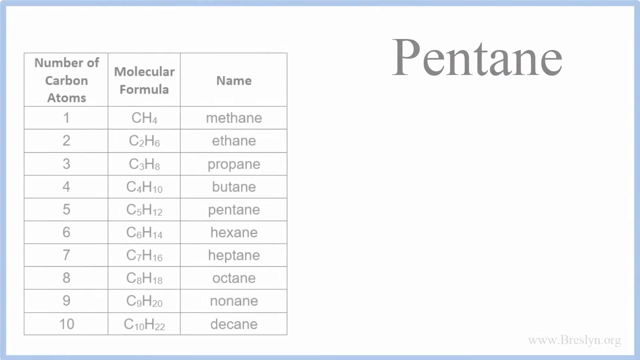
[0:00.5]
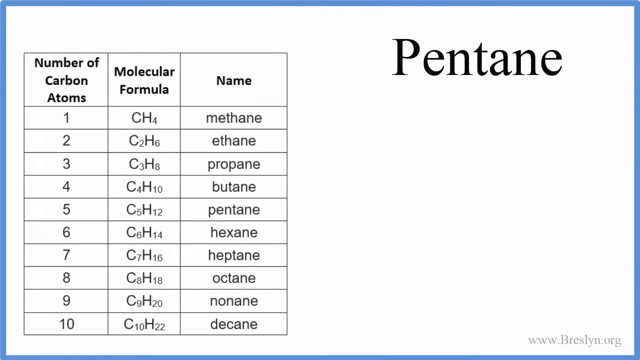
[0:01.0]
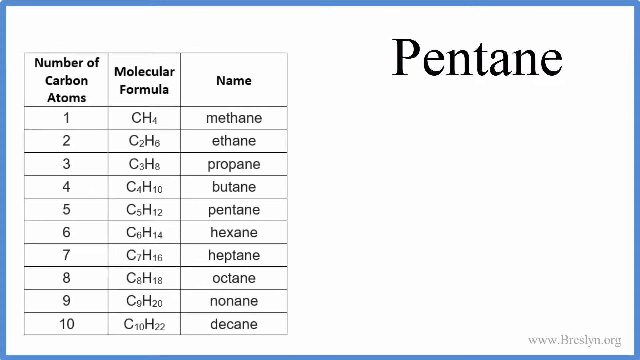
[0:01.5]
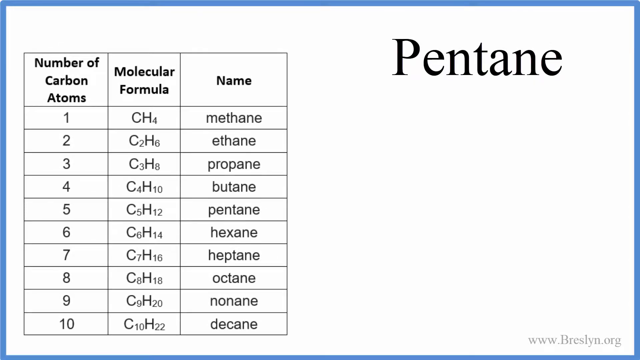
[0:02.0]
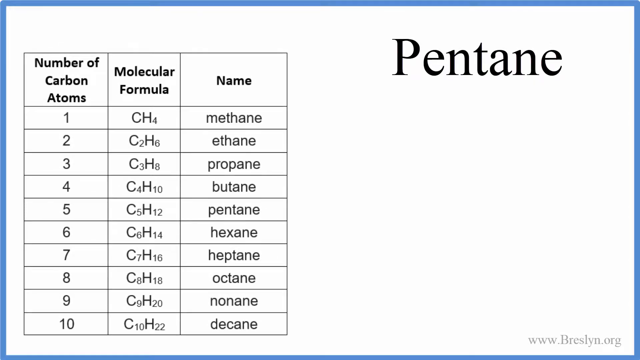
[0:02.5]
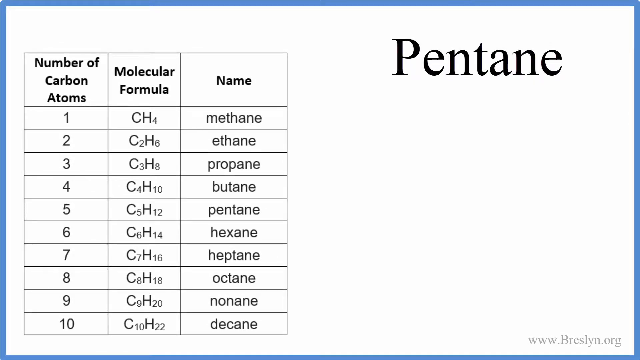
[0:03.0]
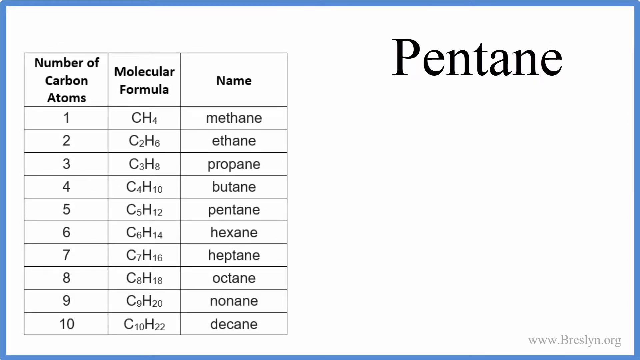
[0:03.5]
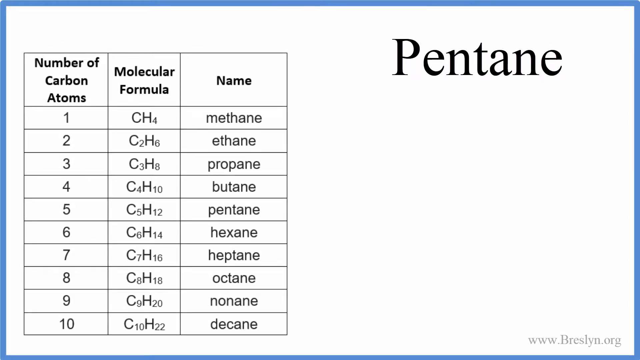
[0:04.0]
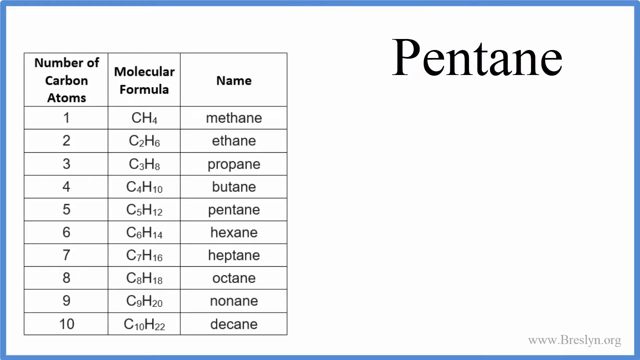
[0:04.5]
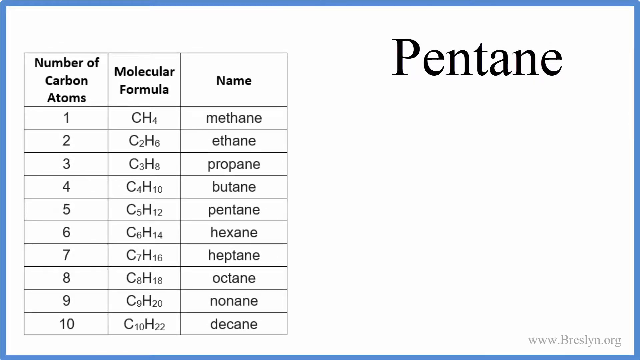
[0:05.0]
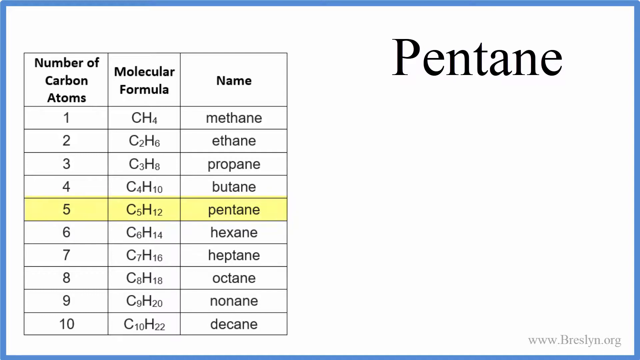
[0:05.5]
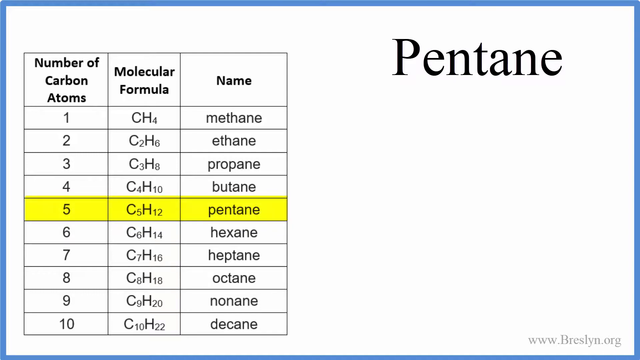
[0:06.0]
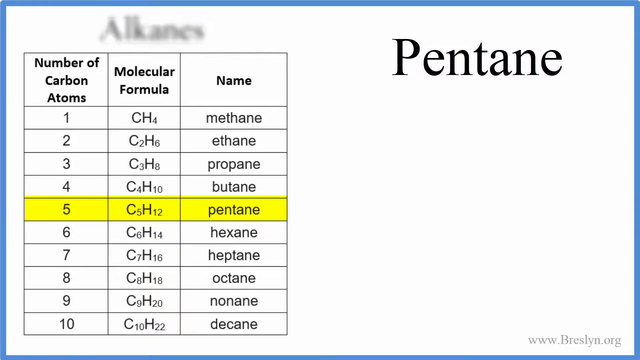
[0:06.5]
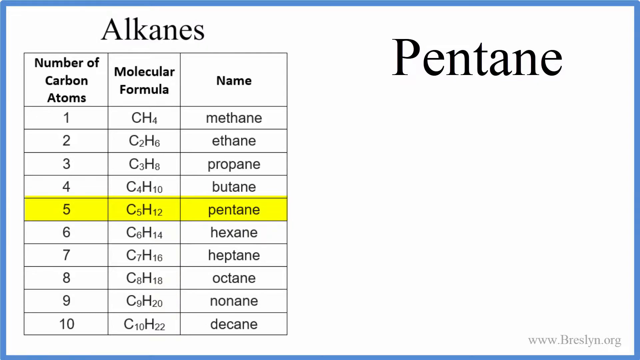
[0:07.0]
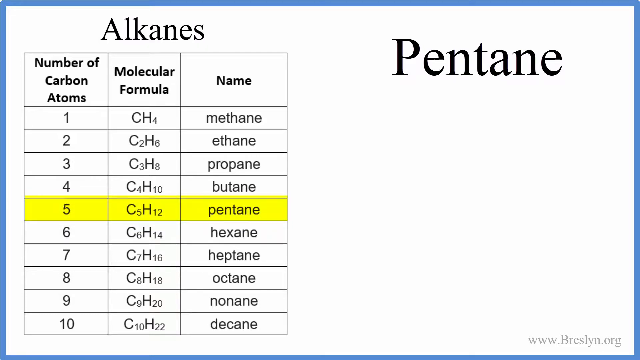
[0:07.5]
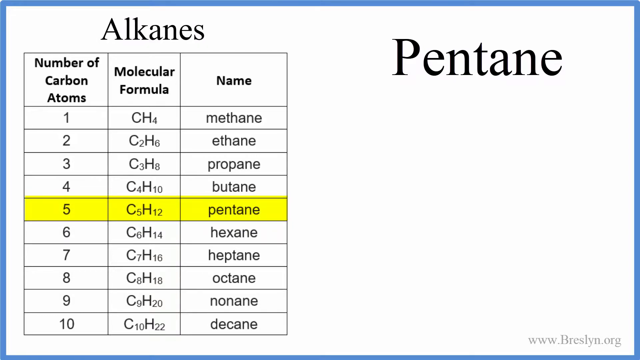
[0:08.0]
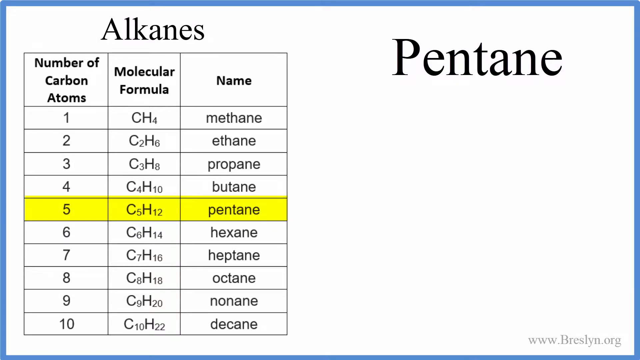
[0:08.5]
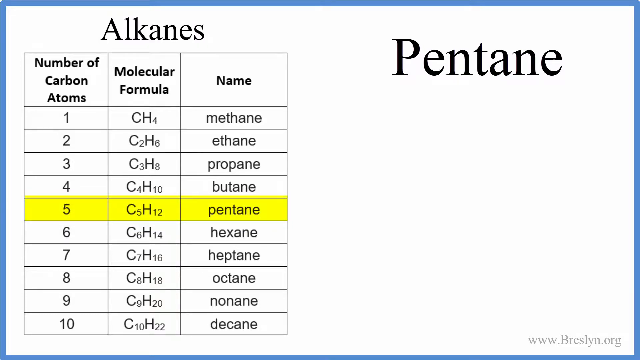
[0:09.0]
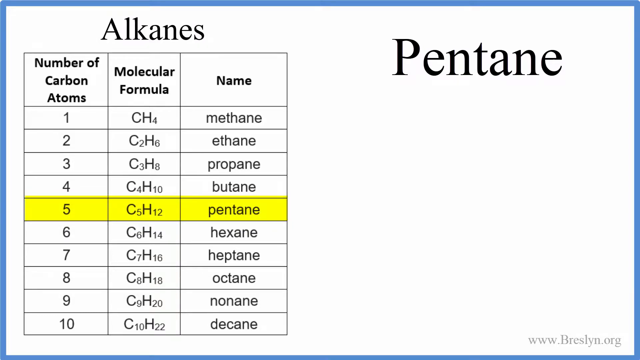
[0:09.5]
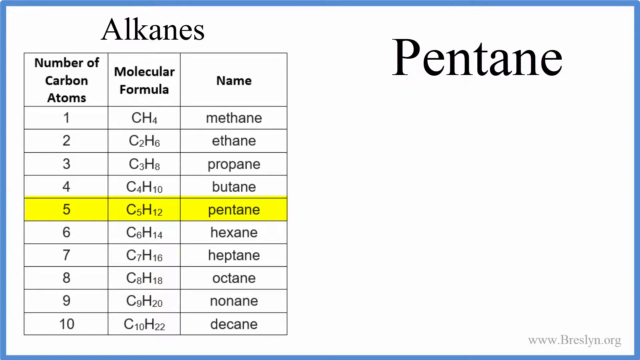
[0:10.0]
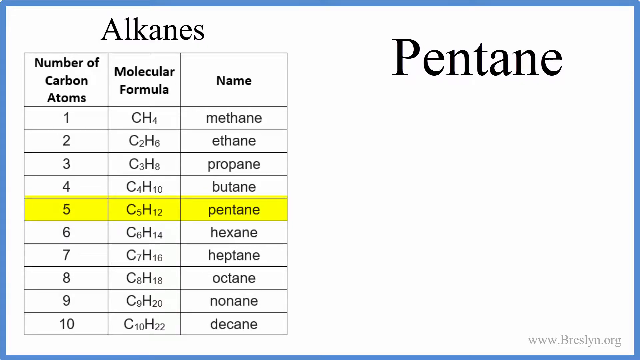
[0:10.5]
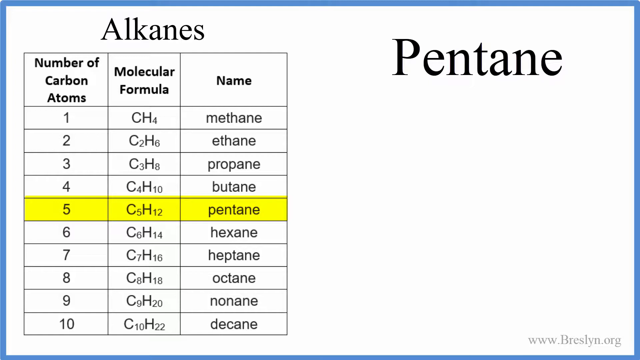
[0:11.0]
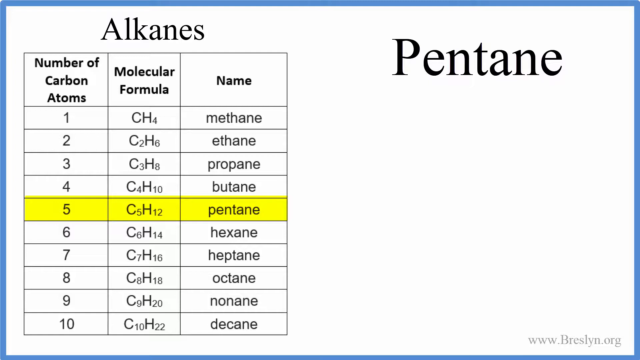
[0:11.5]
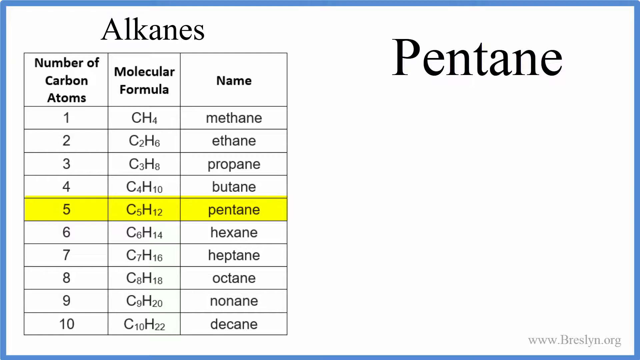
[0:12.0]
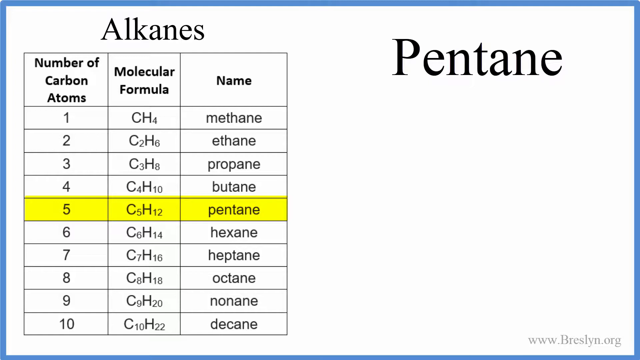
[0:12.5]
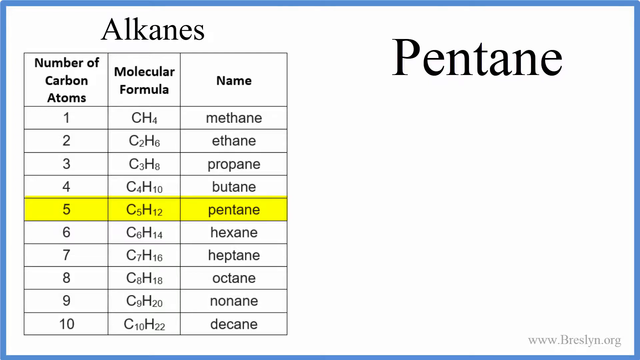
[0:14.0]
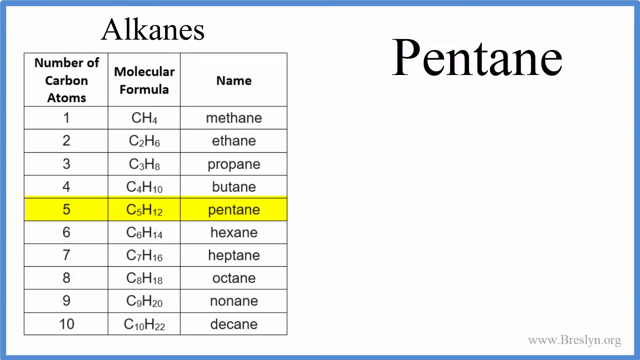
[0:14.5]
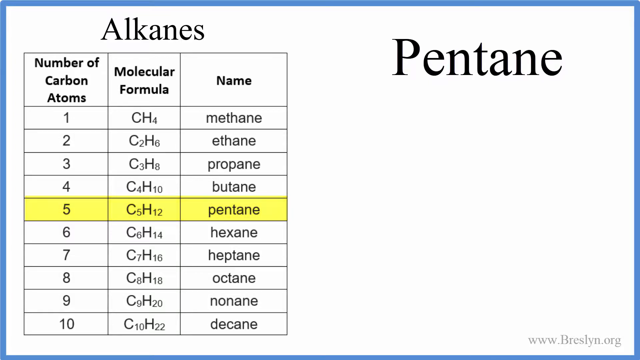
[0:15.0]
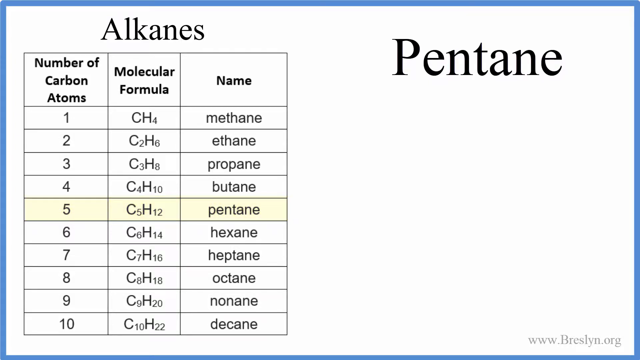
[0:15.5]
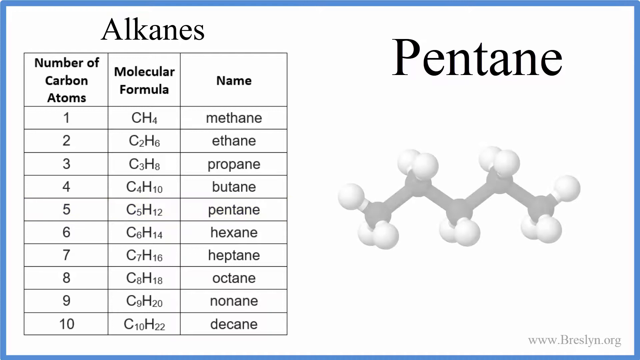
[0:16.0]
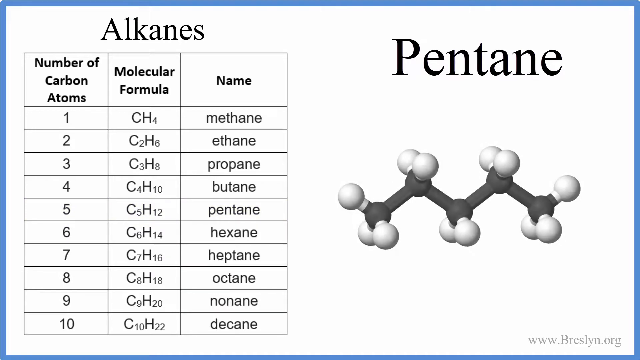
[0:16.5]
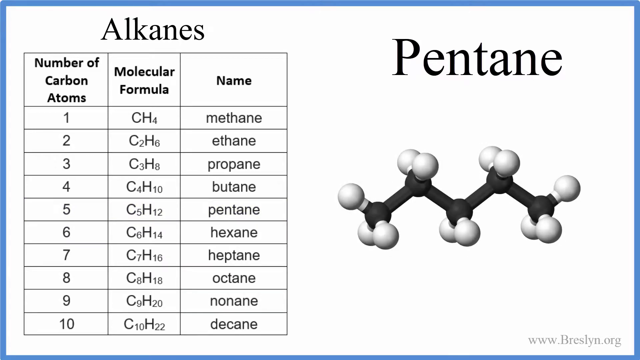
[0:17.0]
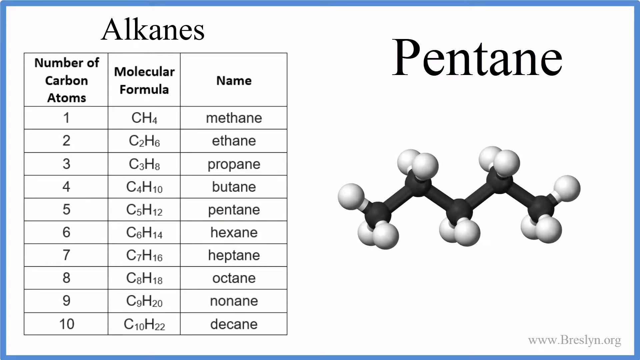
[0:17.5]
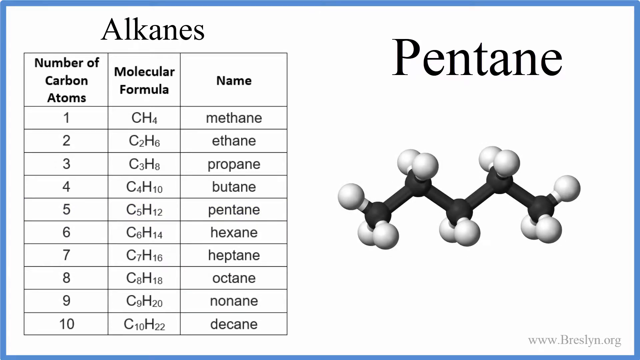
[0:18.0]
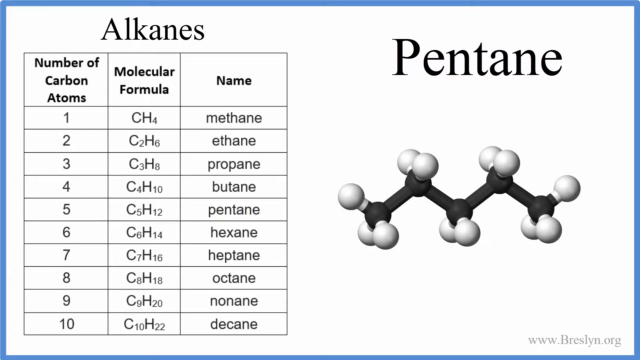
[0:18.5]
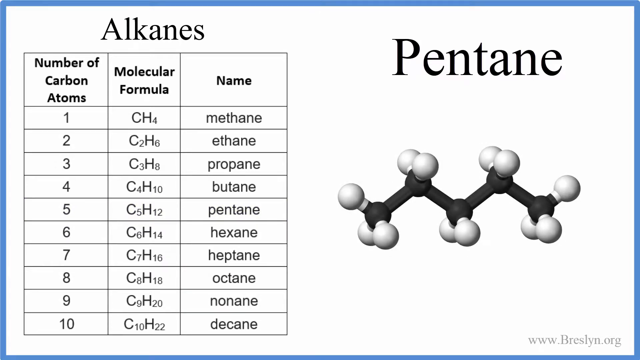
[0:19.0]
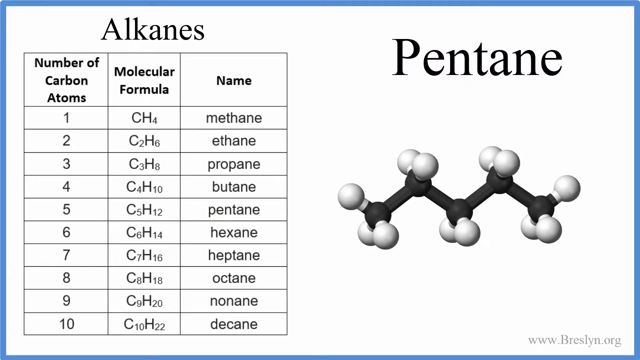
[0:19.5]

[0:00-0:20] The word "pentane" appears in the upper right corner. On the left side is a chart with three categories: the number of carbon atoms, the molecular formula, and the name. Row five is highlighted in yellow. On the right side, white balls are attached to a crooked black line to show what the molecular structure looks like. The structure zigzags twice, with one white ball on each end, and the other five points of the zigzag have two balls each, side by side. The chart lists 10 different carbon atom combinations, and at the top the category is the alkanes.